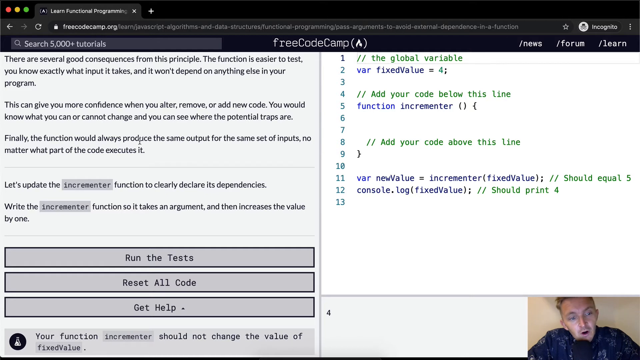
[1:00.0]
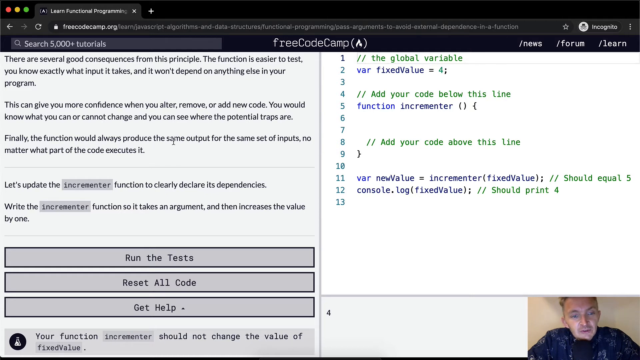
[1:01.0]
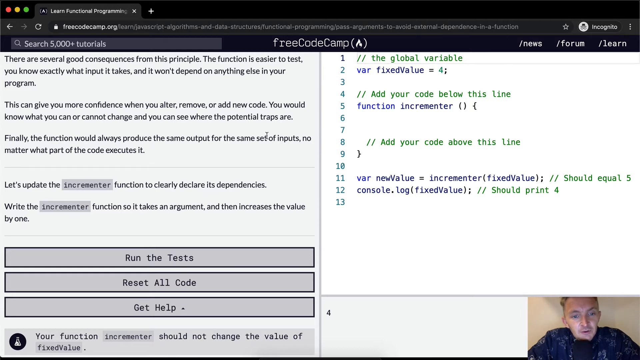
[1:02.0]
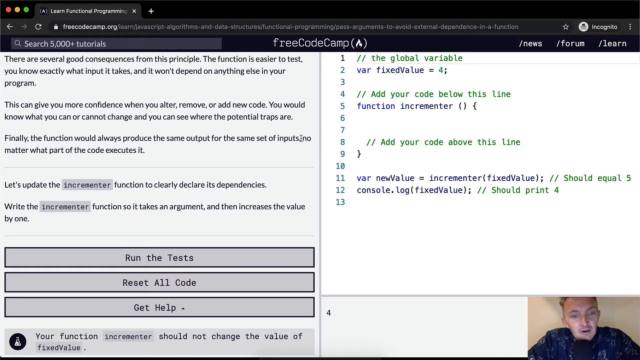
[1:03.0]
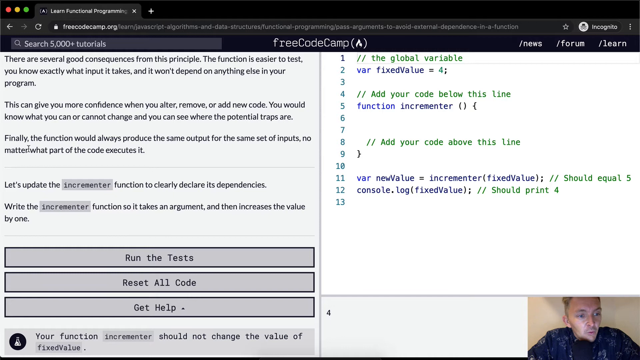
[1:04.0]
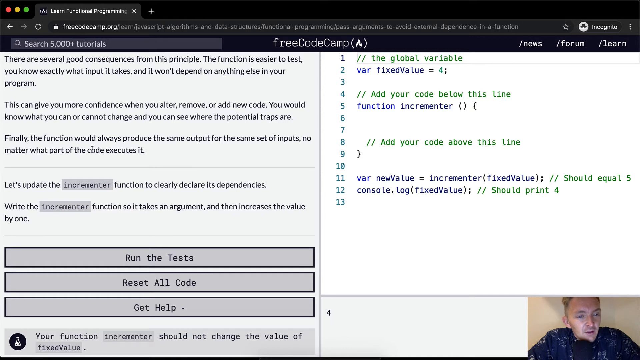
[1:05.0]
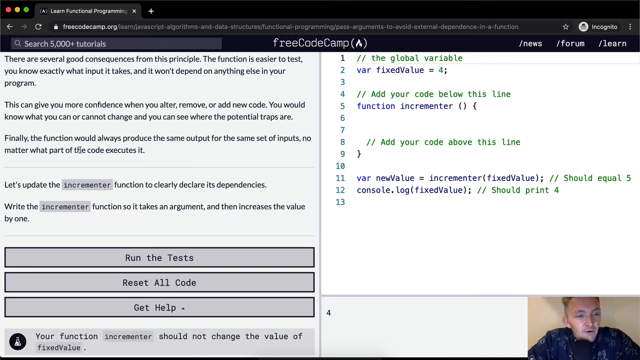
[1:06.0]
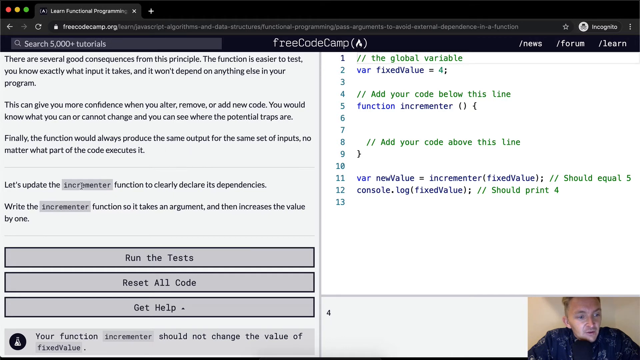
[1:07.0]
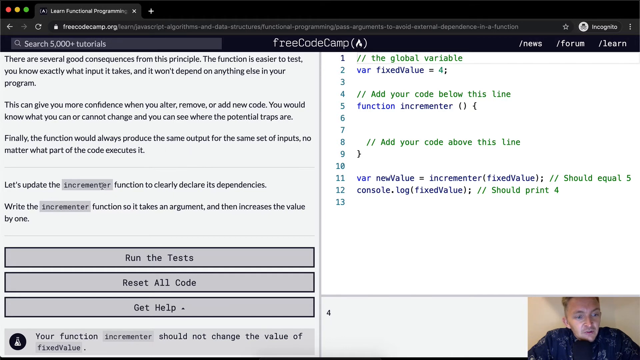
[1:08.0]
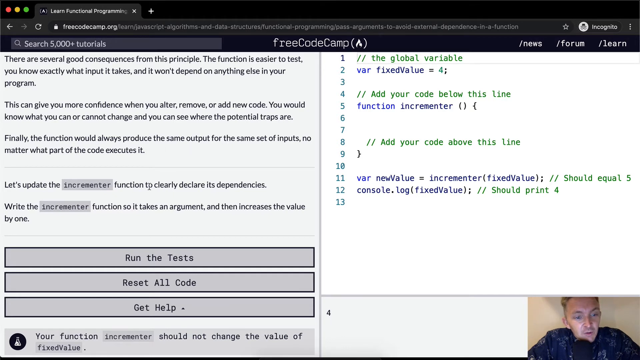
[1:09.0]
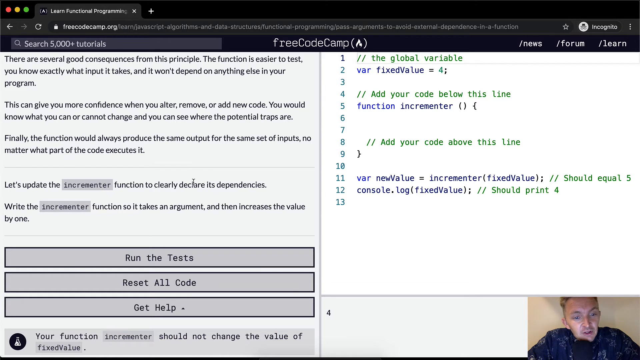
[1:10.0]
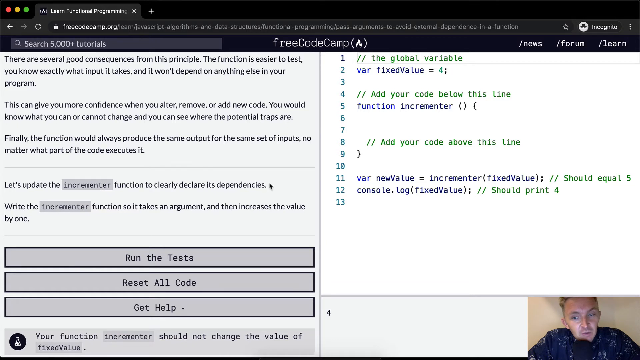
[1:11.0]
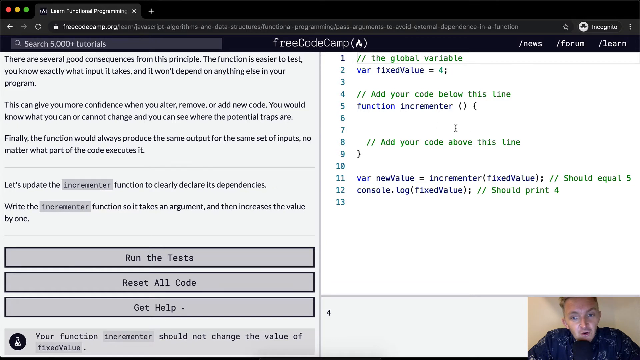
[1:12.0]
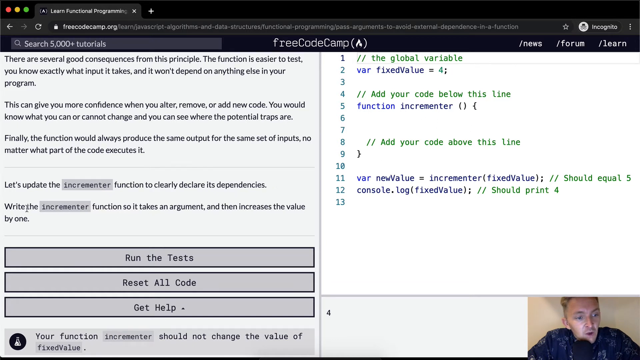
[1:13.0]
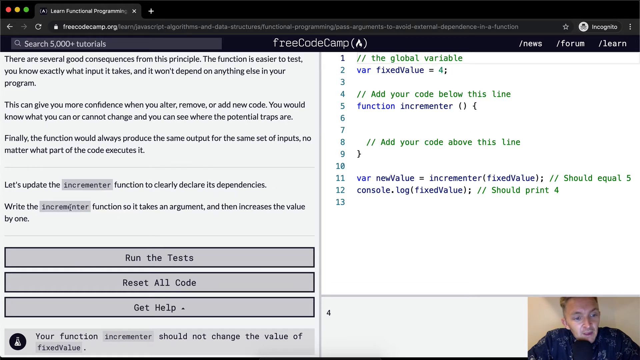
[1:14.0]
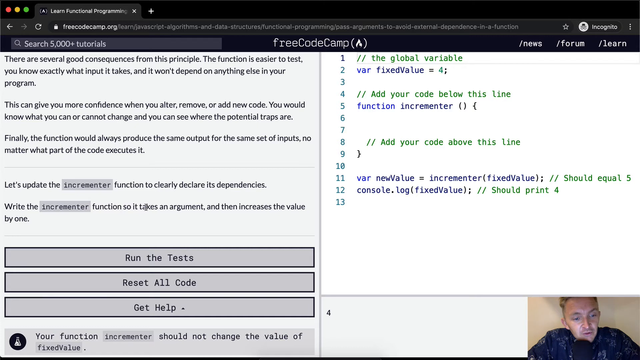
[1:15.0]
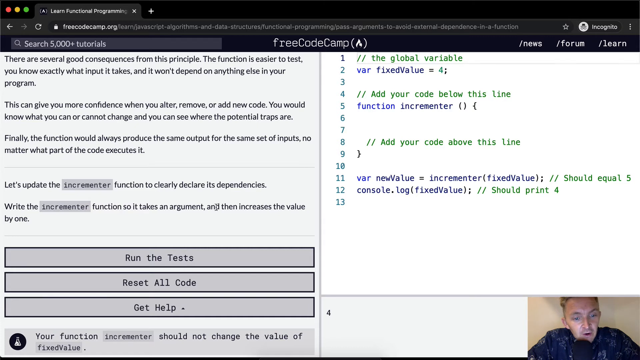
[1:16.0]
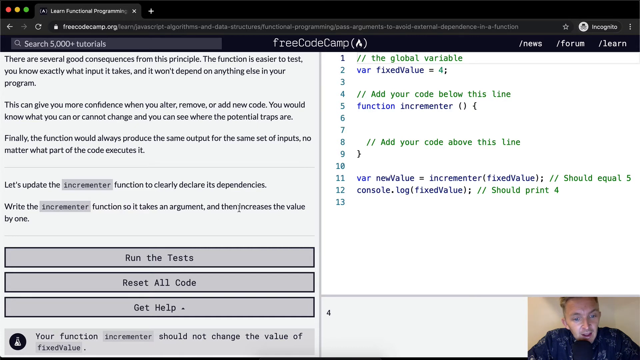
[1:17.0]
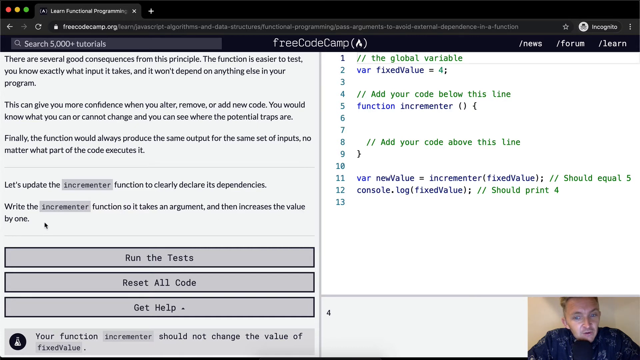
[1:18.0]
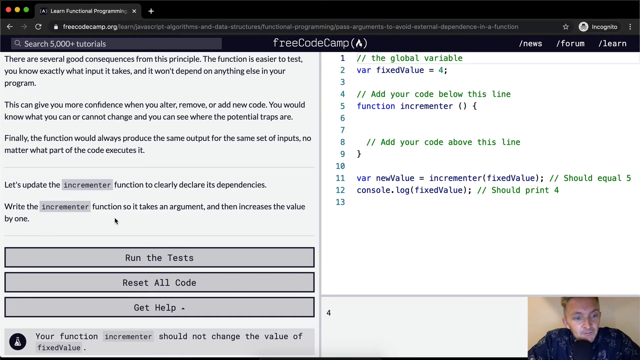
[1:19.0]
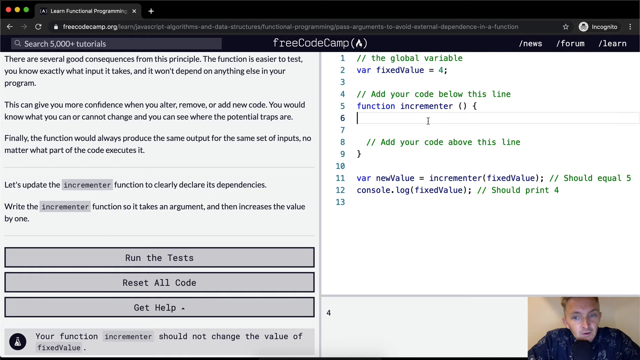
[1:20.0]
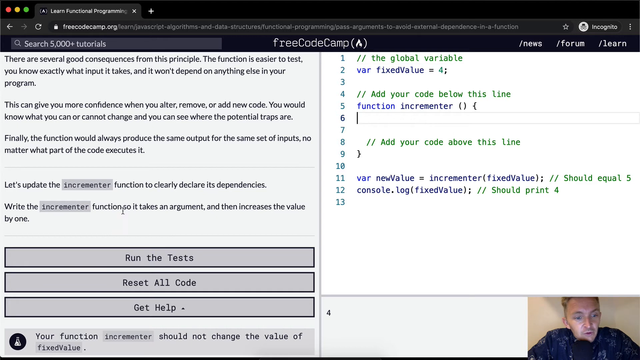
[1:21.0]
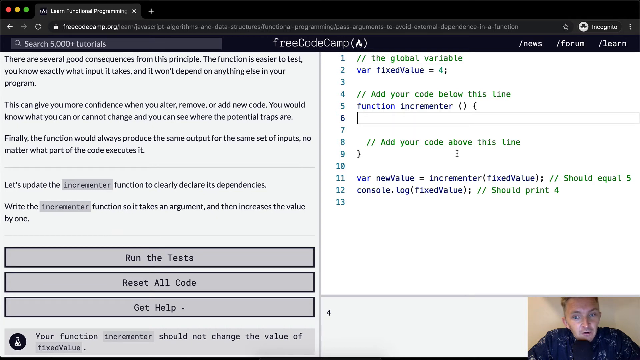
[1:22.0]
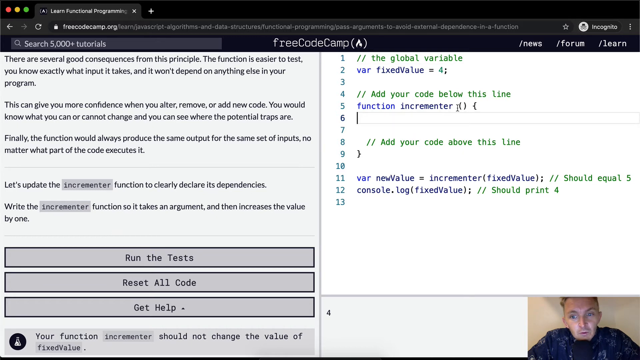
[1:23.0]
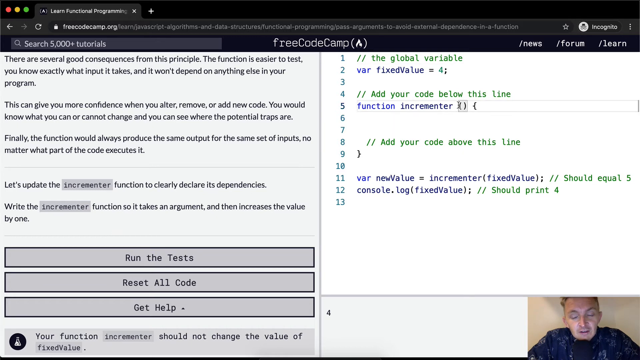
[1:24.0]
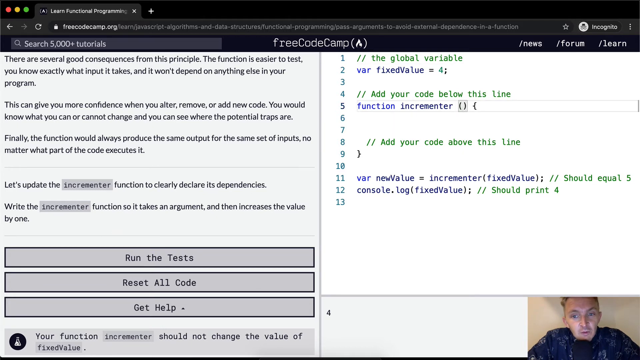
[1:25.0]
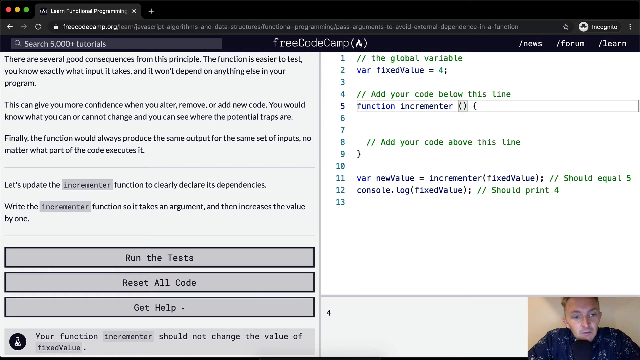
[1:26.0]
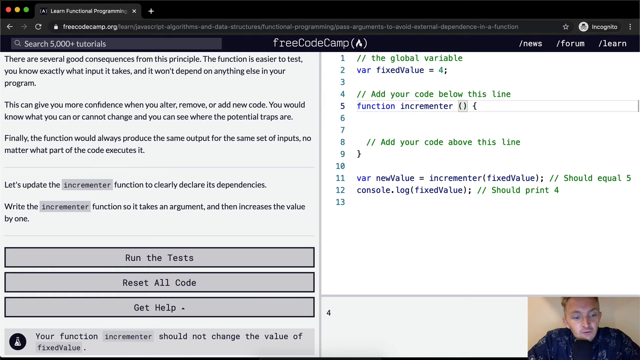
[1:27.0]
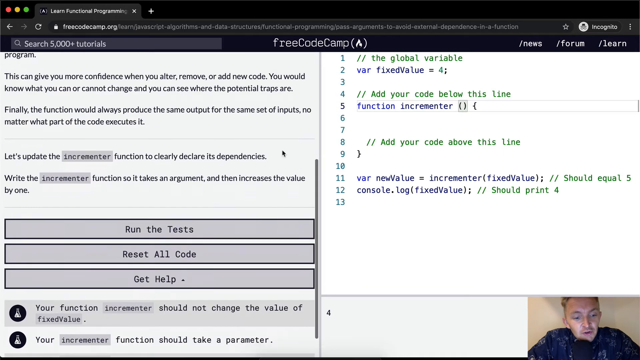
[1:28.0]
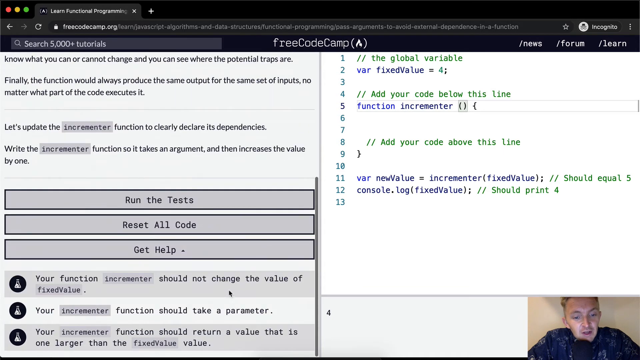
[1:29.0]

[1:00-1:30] Code is added on the right-hand side, where the increment function is updated so that it takes an argument. There is an option reading "add your code above this line." The view scrolls down through the options, and the function increment is seen being inserted in the brackets as a value. The person shows step by step how to do this, with an option to run the test.